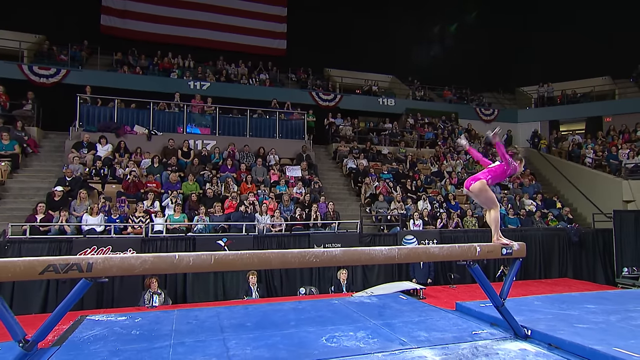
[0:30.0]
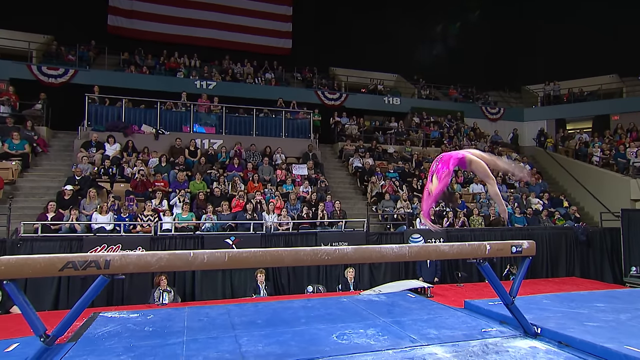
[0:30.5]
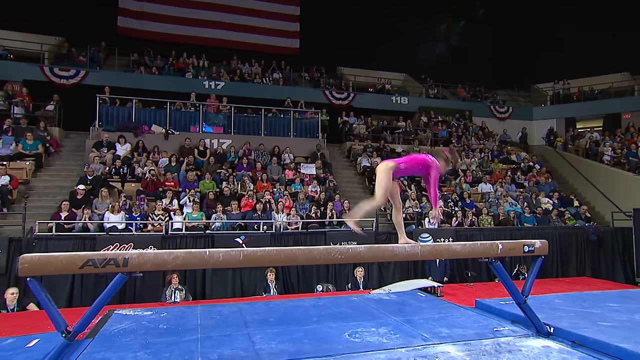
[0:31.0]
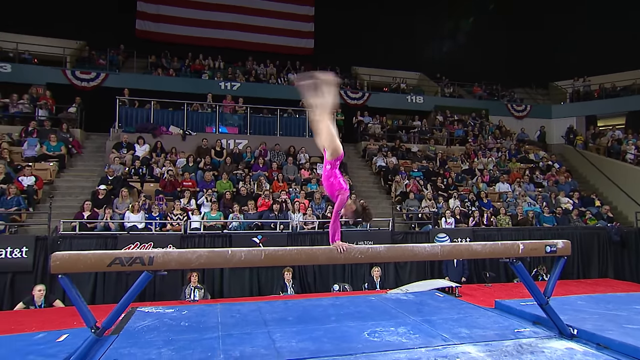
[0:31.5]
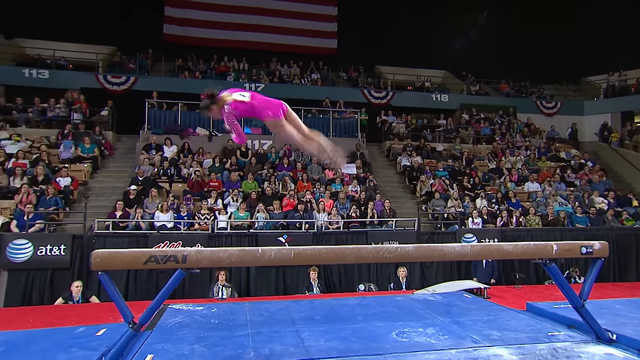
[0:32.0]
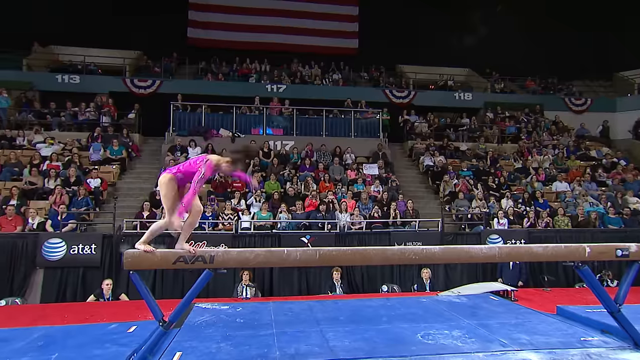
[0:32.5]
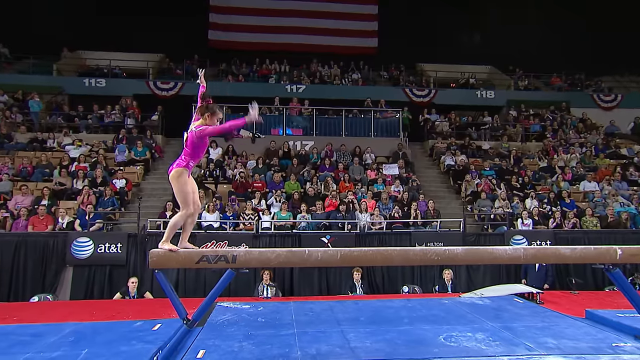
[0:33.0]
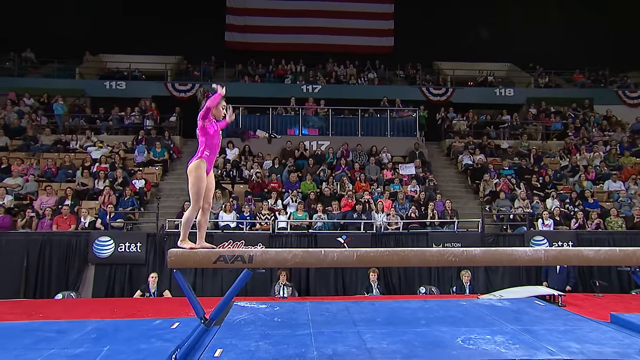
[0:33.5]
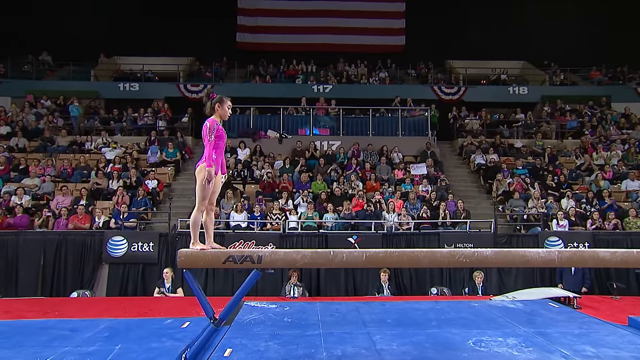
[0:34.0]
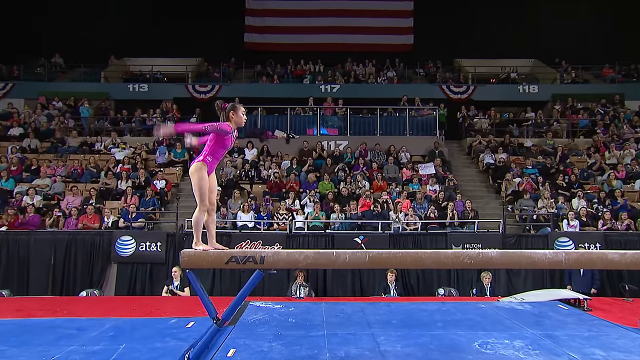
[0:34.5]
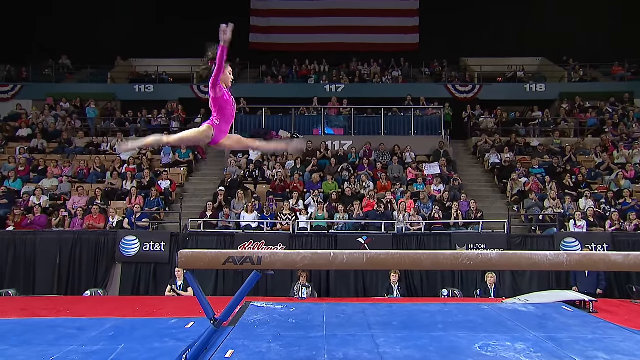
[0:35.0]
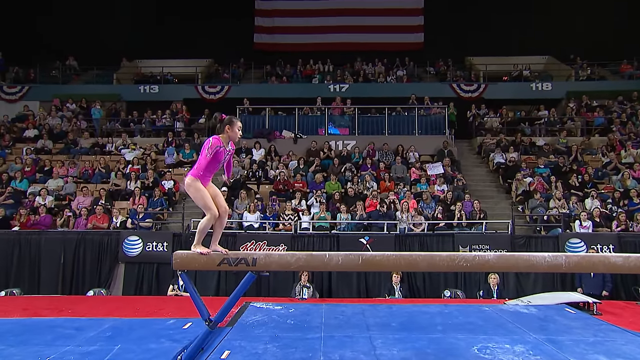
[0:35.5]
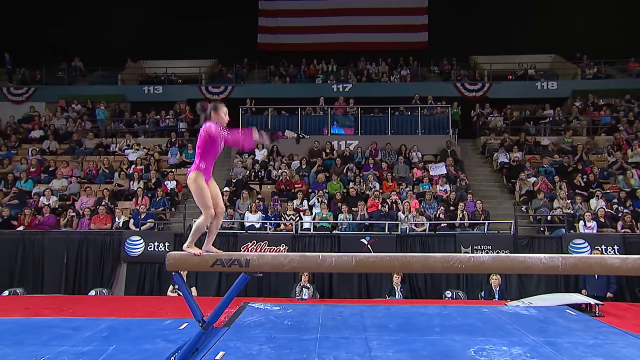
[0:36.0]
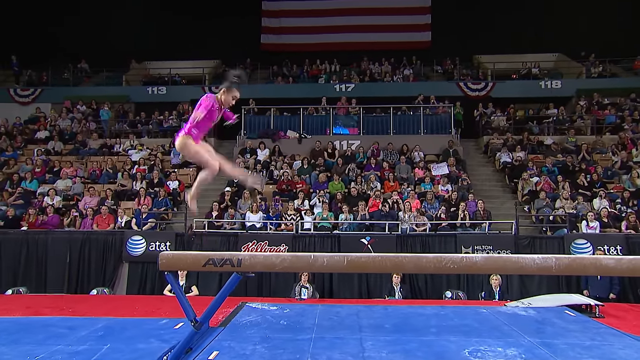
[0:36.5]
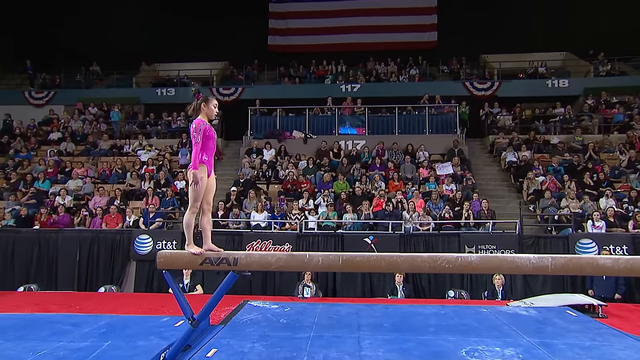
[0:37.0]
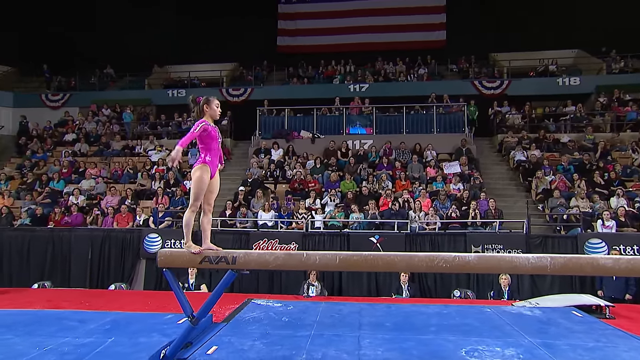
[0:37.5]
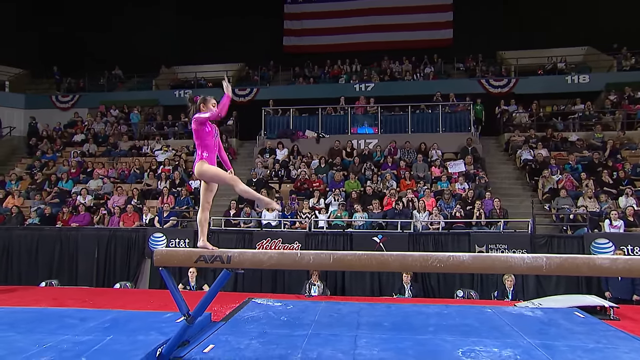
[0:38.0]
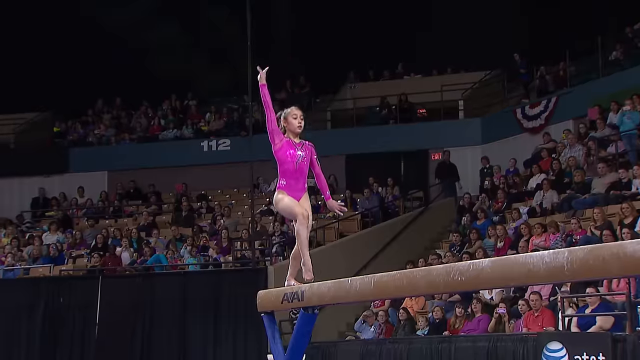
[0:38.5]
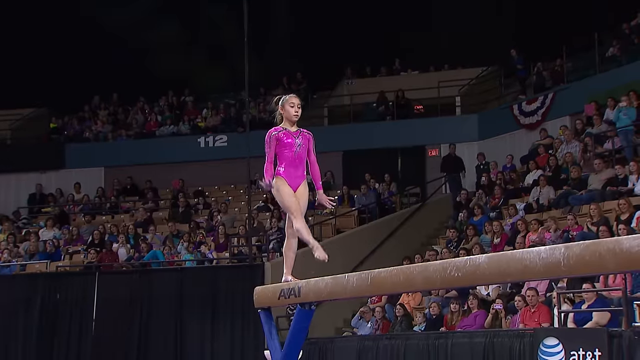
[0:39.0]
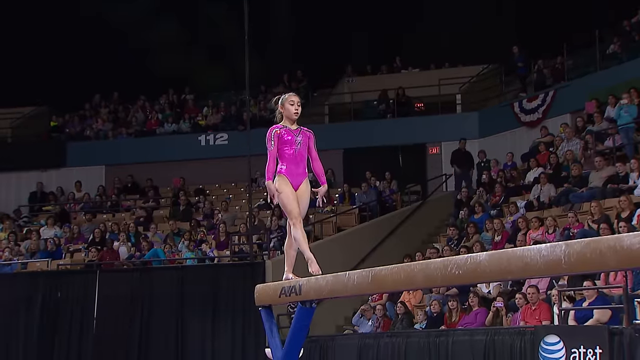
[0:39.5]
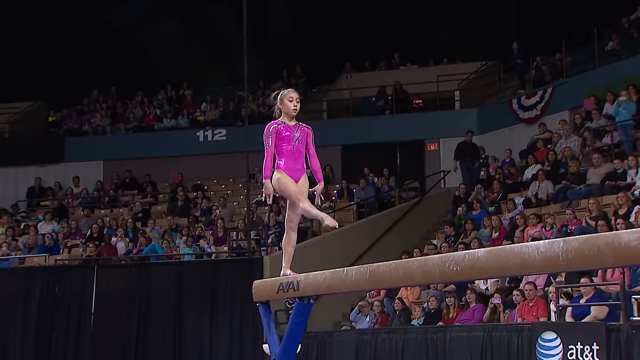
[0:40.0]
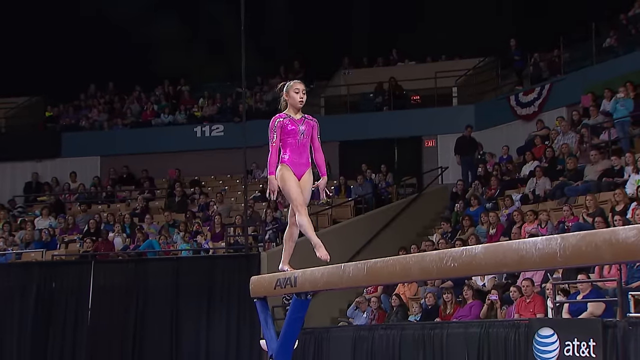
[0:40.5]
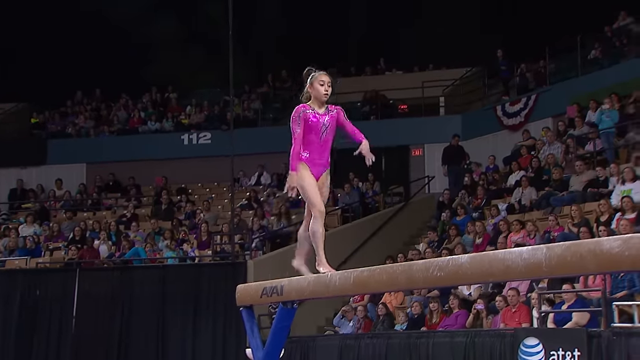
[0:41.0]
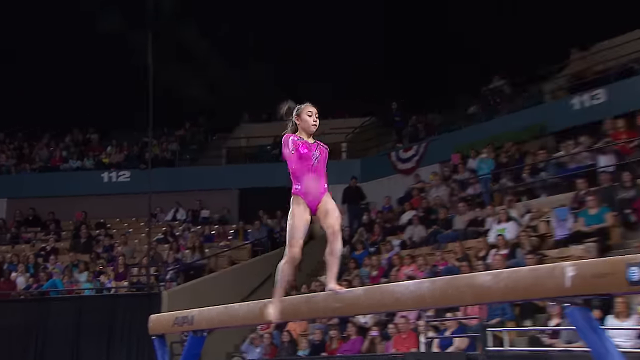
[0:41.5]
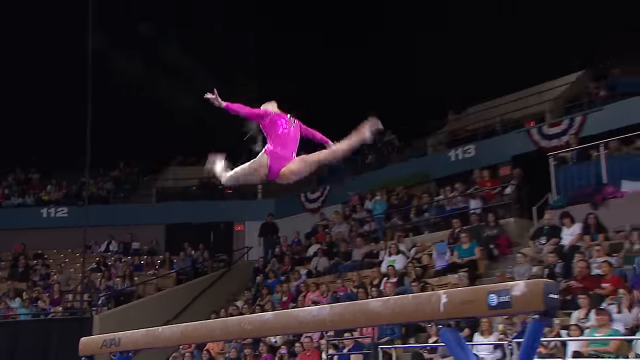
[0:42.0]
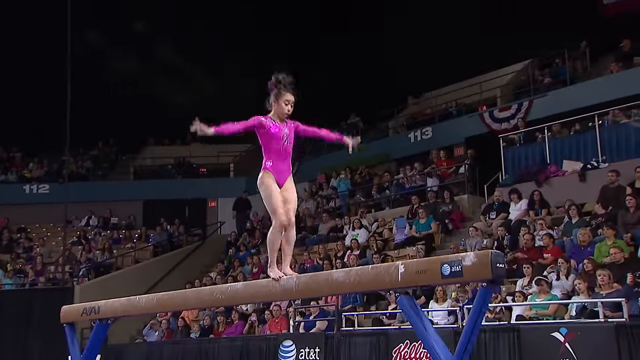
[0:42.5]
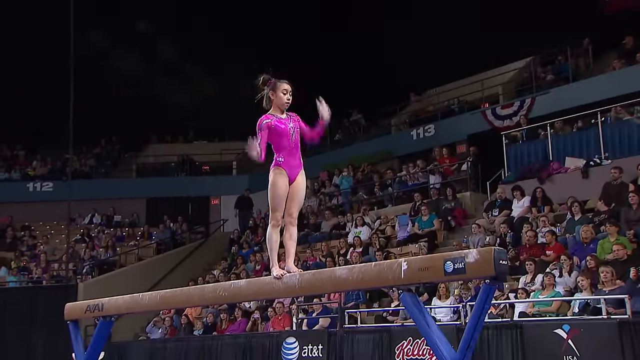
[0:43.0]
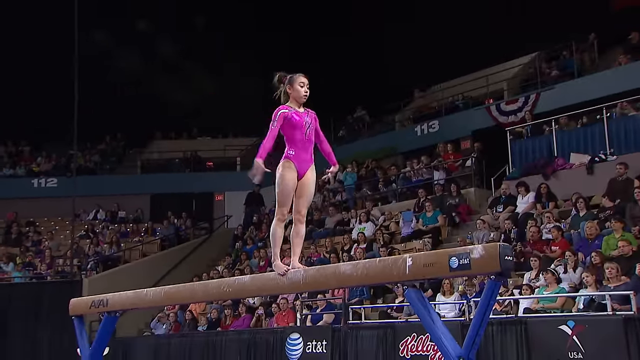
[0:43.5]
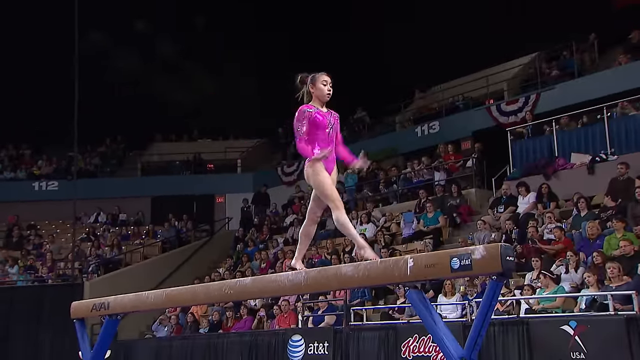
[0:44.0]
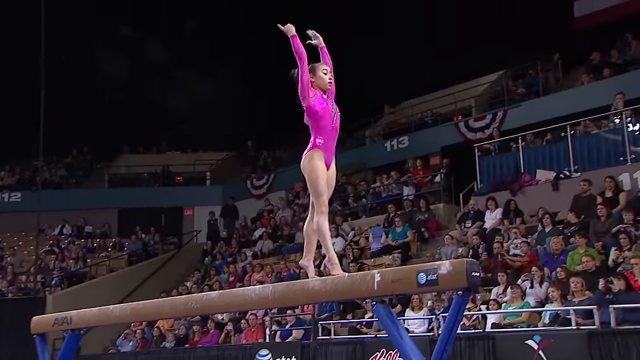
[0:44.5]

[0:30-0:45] The gymnast flips backwards several times on the beam. She jumps, kind of dancing with one leg forward, dashes forward a little, and jumps with one leg sticking out in front and the other sticking back. She jumps with her arms forward, kind of prancing about. She is wearing a light purple outfit and has her hair in a bun. She flips backwards, her hands pressed and clasped, and keeps jumping. On the blue mats underneath her there is a lot of white dust, and there is red around the blue mats. Black curtains are in the background, along with sponsorships by AT&T, Kellogg's, USA Gymnastics, and Hilton Honor. At the top, numbers are visible in the stands, and part of the American flag is in the background. Five judges are judging the gymnast. She plants her hands and feet and jumps in the air.